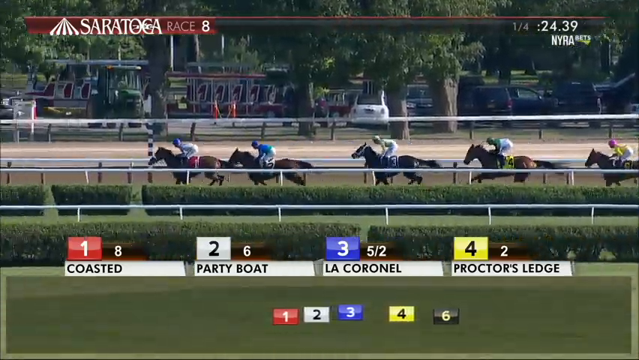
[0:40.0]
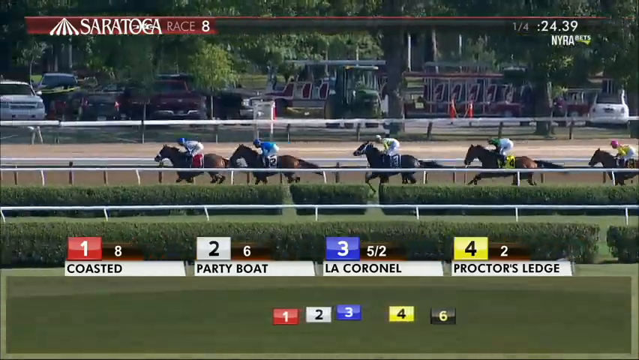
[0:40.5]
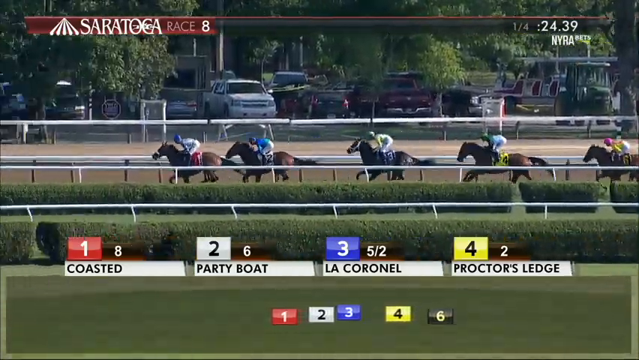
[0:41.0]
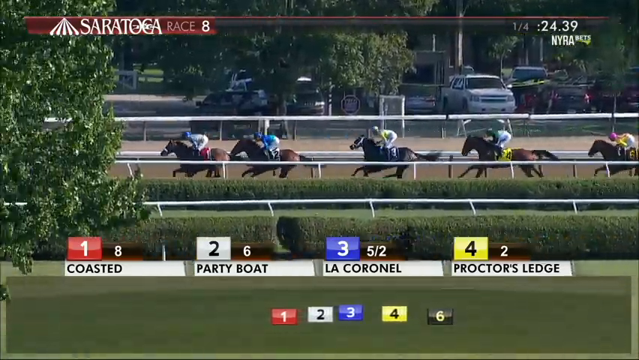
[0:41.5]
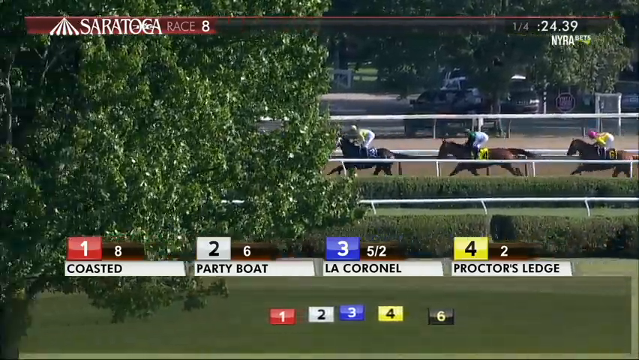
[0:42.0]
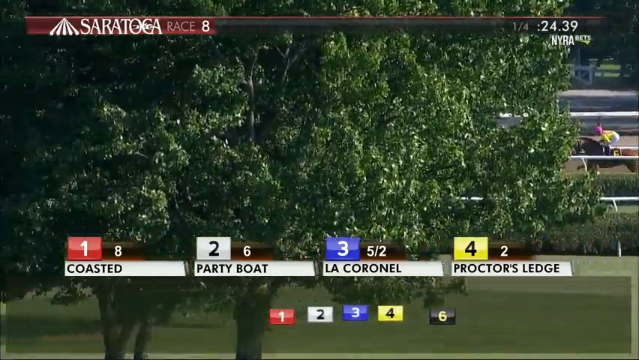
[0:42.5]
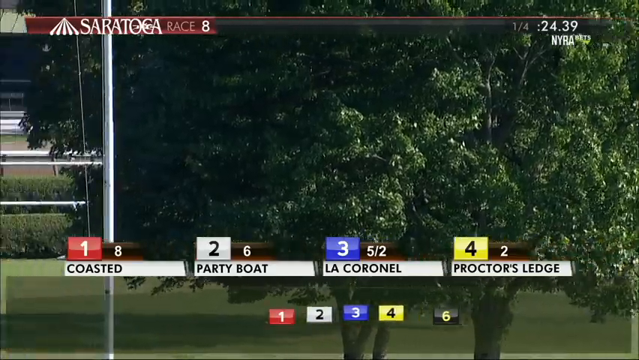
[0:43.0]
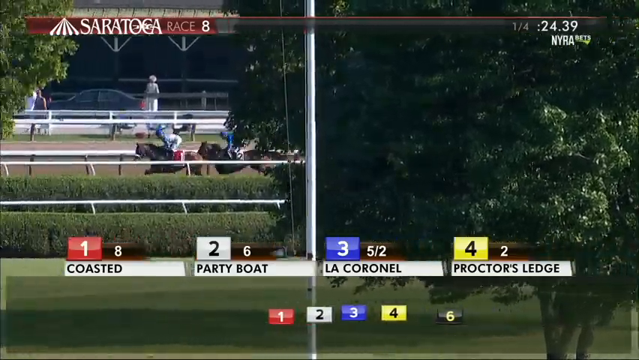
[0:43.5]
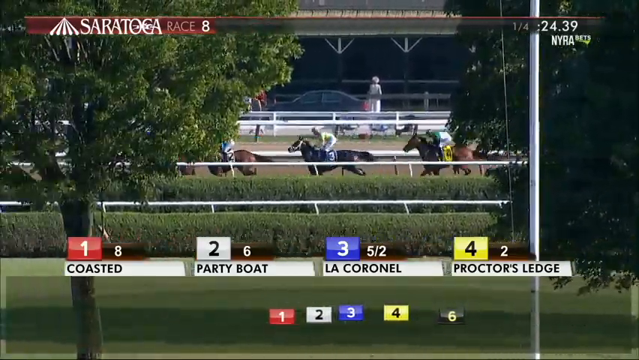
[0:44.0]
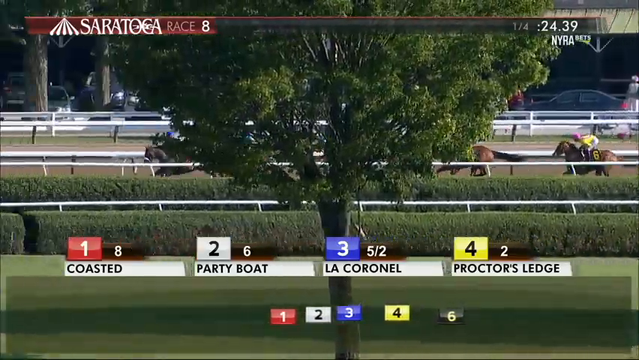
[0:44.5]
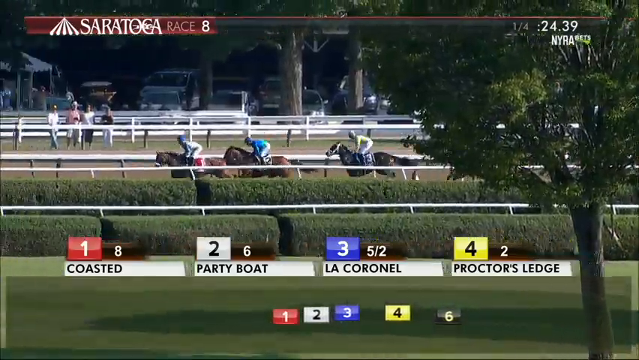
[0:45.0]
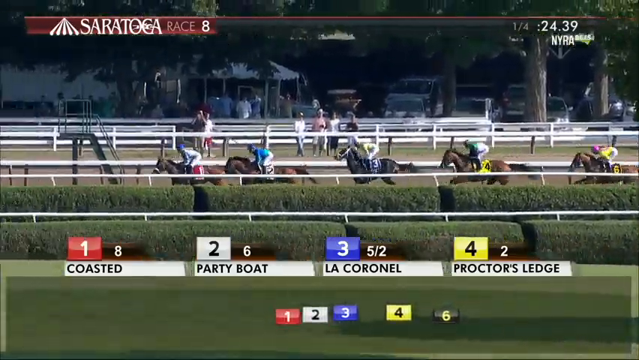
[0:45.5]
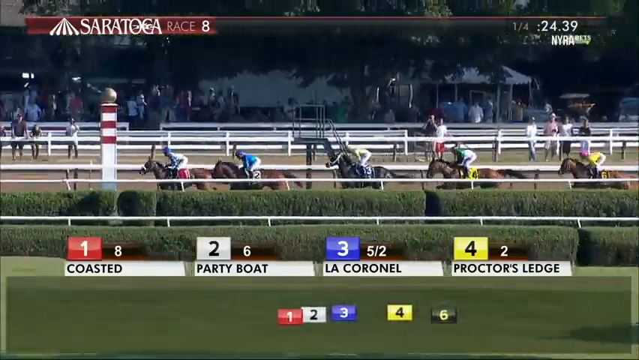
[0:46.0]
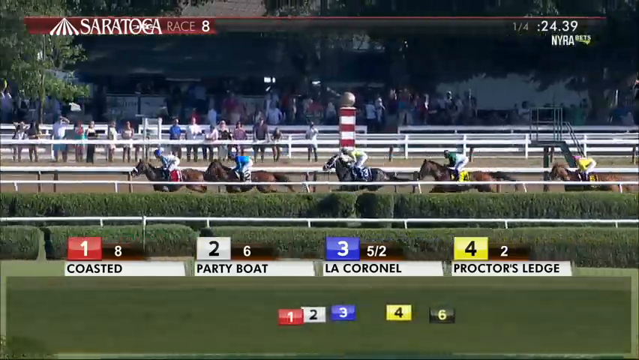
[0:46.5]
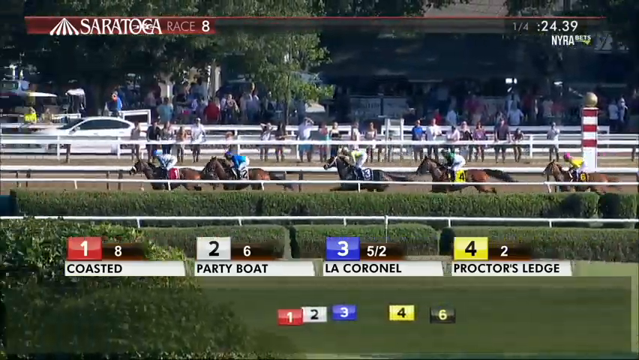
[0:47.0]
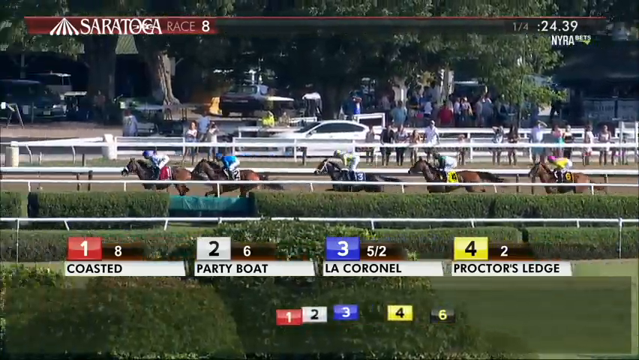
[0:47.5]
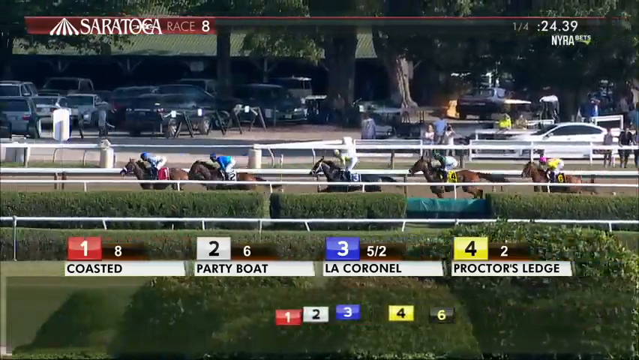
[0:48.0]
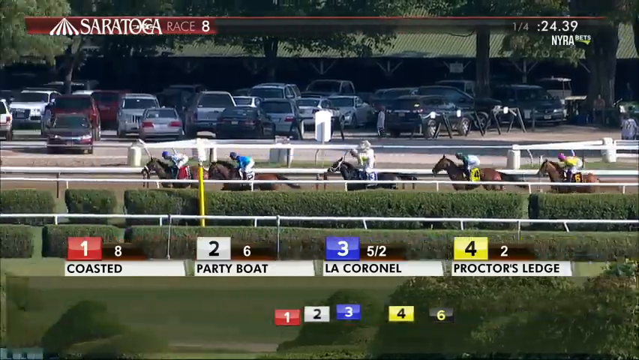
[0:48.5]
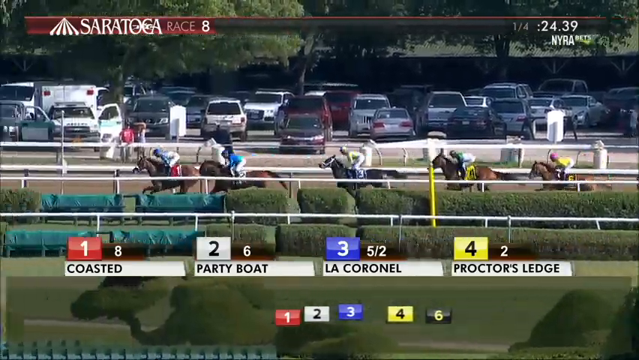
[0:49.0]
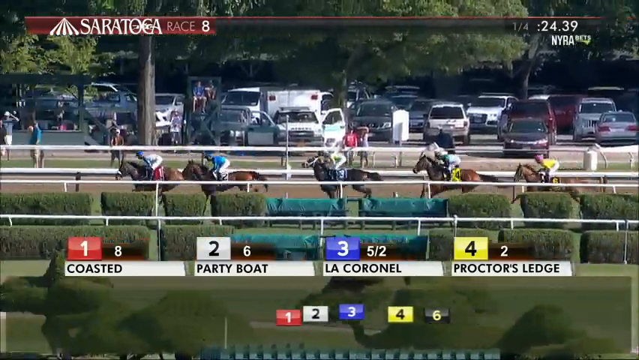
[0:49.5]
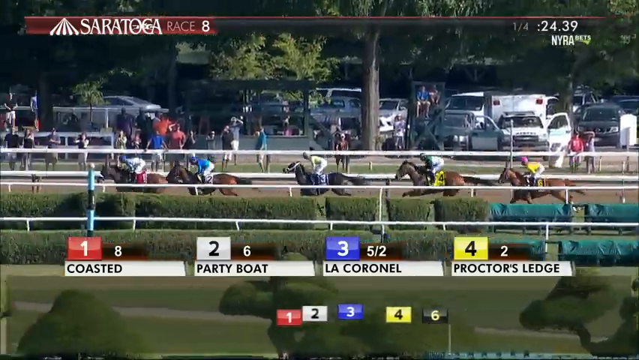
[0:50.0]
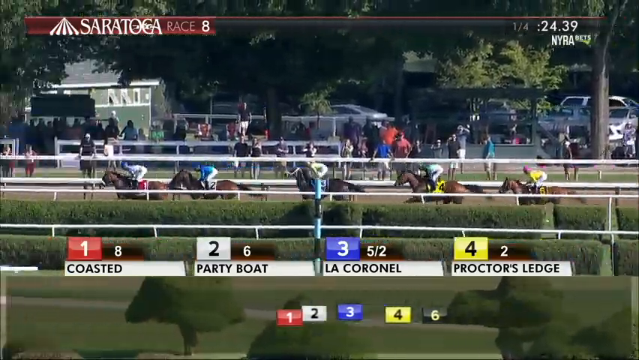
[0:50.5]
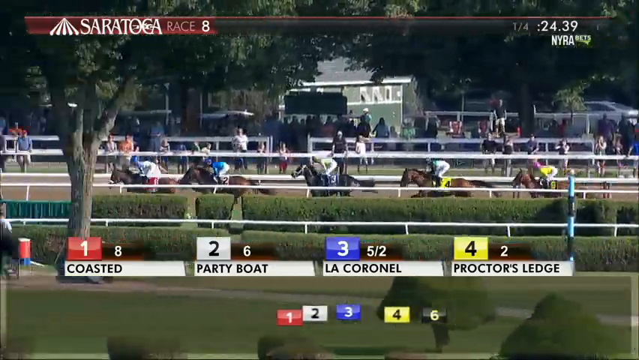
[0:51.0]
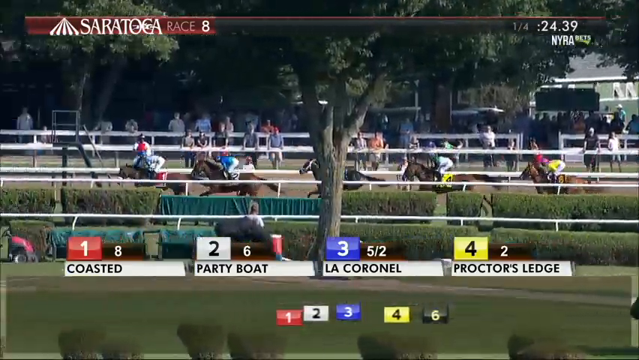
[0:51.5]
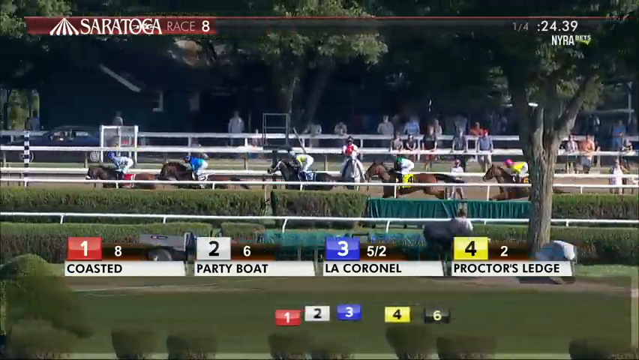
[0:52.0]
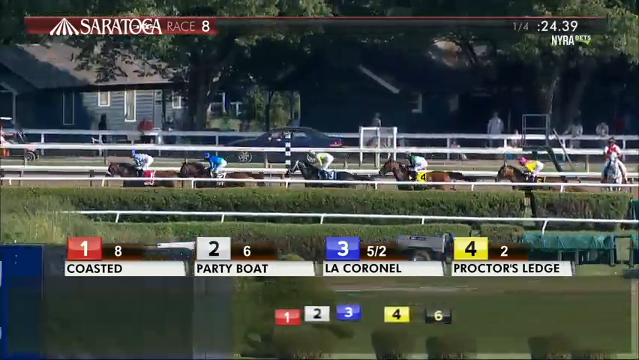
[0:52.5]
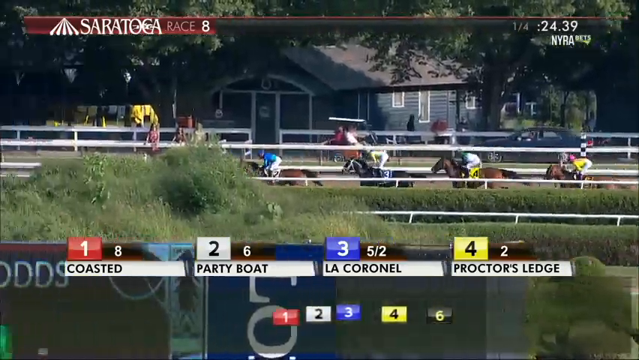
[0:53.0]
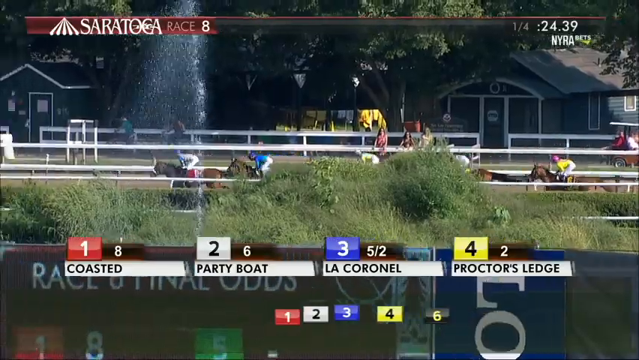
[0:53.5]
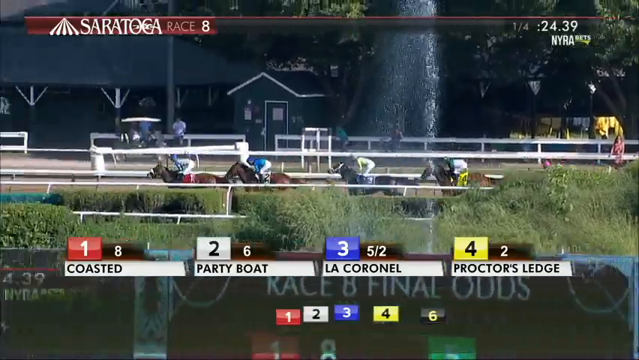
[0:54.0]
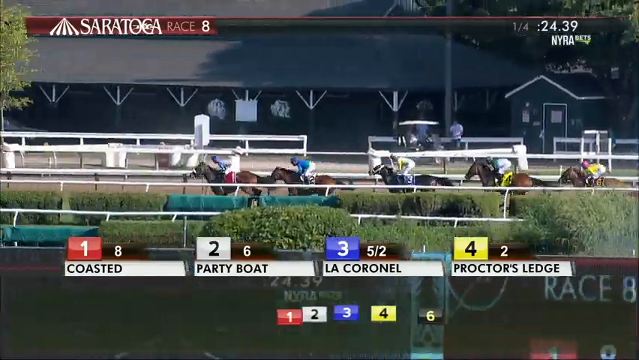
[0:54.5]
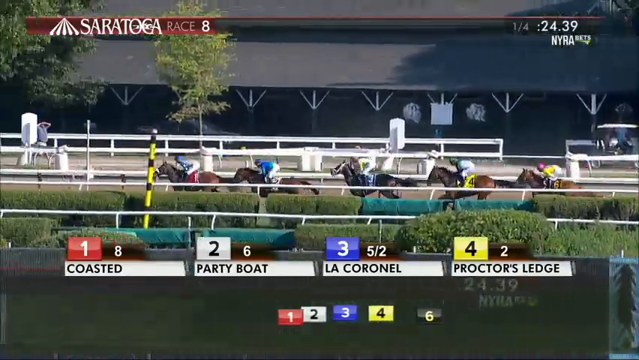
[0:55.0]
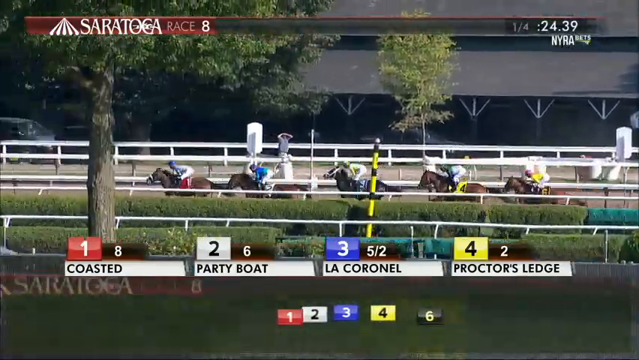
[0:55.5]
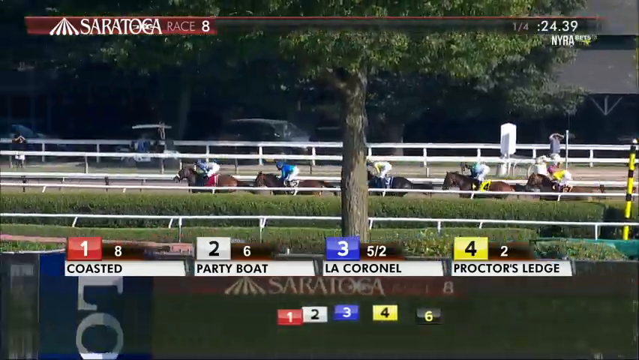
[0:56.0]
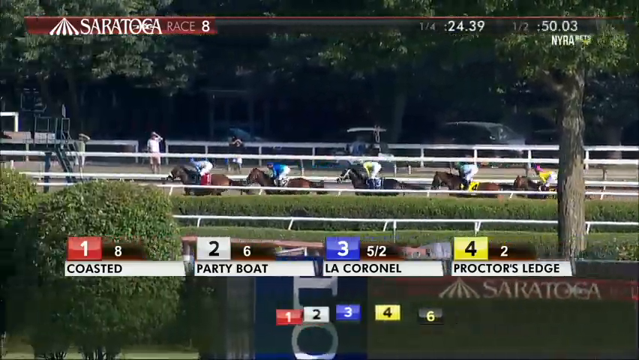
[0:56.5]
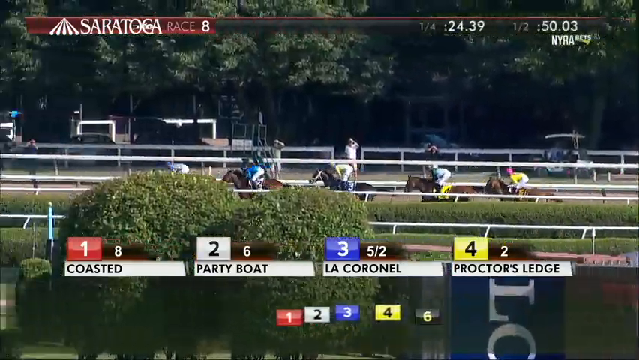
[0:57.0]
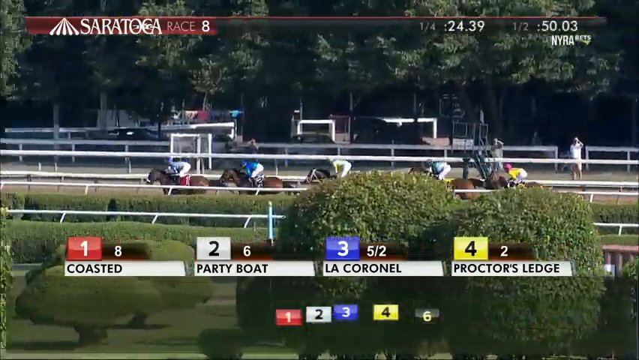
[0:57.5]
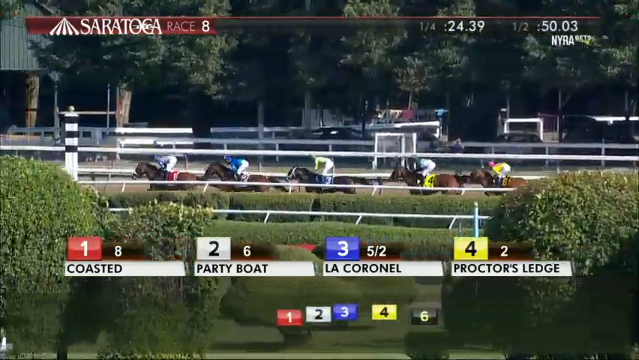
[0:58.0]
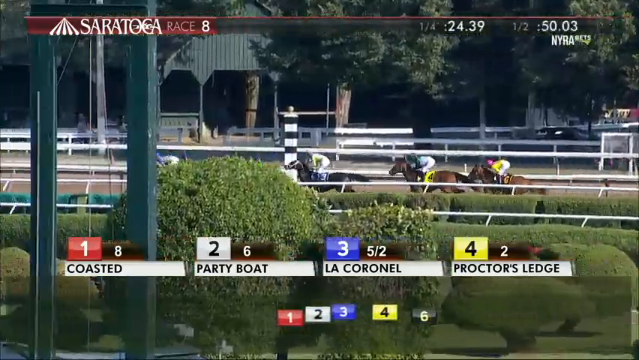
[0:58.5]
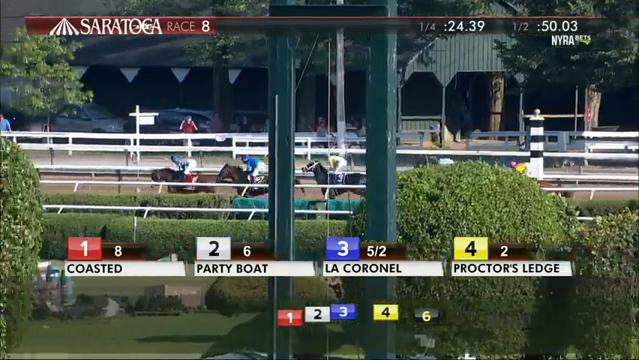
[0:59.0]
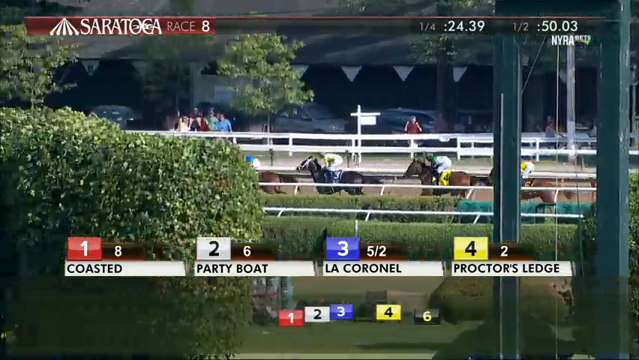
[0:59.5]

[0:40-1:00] The view looks across the racetrack to the other end as the horses pass, with number one, Coasted, in first place. The horses go behind a tree and briefly drop out of view, and the camera keeps following them until they are in full view again. People in the background are looking on. A little fountain comes up in the middle as the horses pass. A time reading "24.39" pops up in the upper right-hand corner. Horse number one appears to be first, horse number two second, and horse number three third.